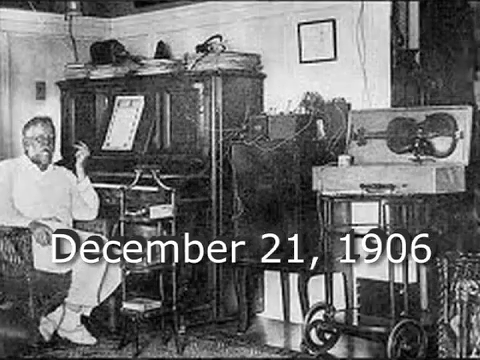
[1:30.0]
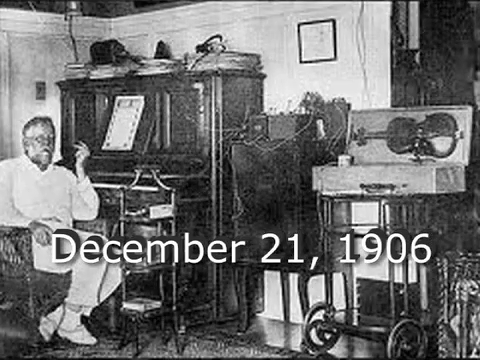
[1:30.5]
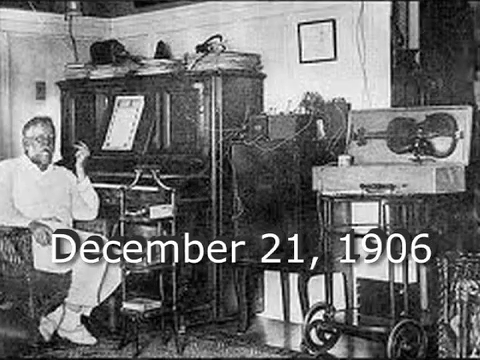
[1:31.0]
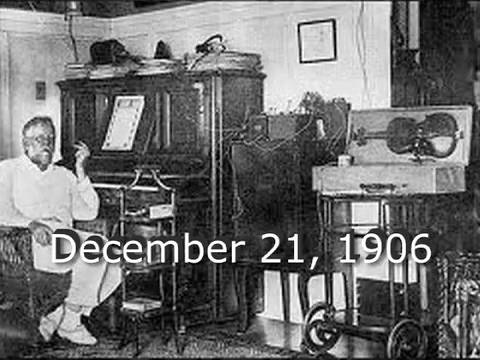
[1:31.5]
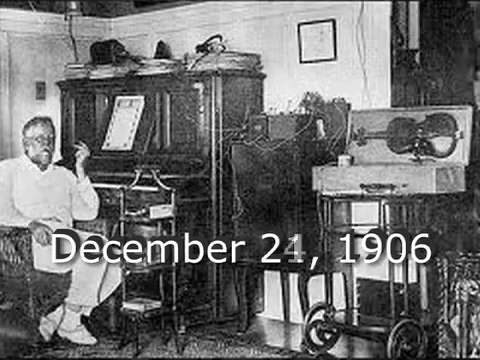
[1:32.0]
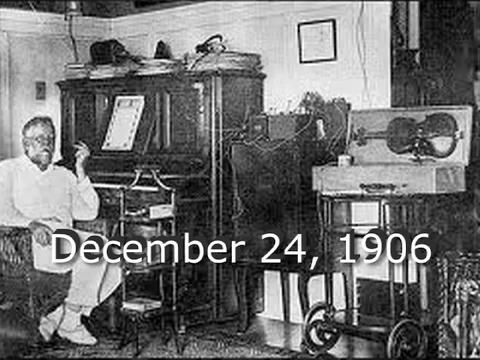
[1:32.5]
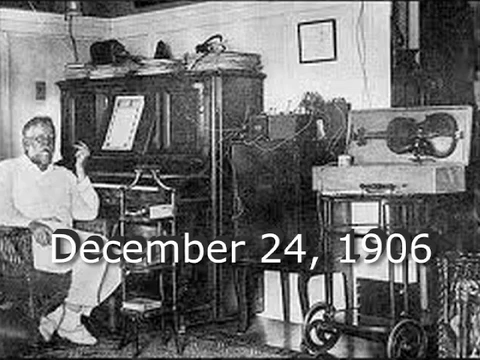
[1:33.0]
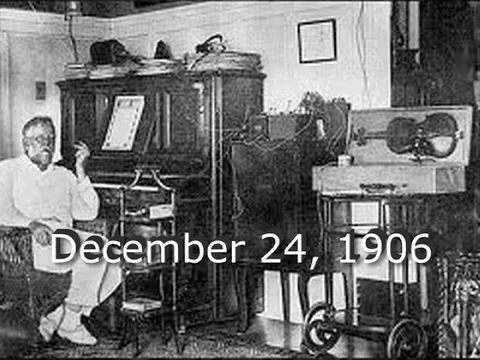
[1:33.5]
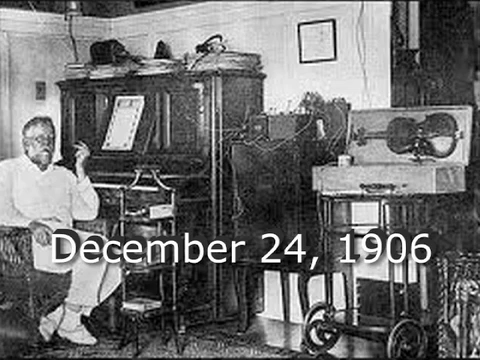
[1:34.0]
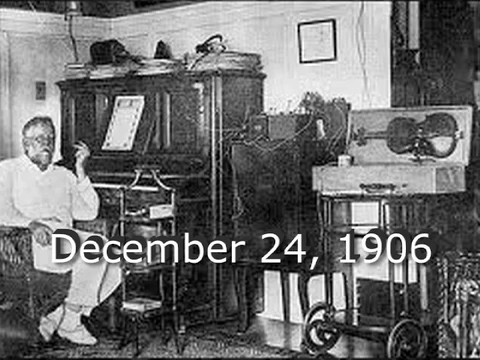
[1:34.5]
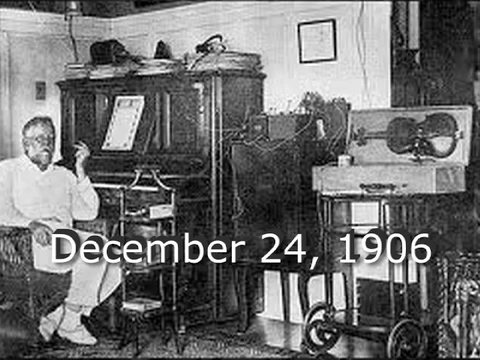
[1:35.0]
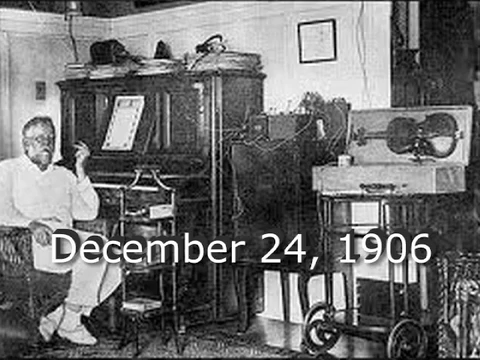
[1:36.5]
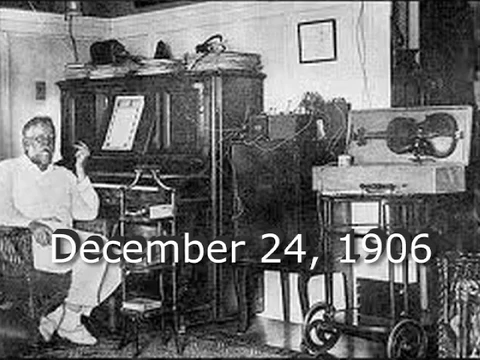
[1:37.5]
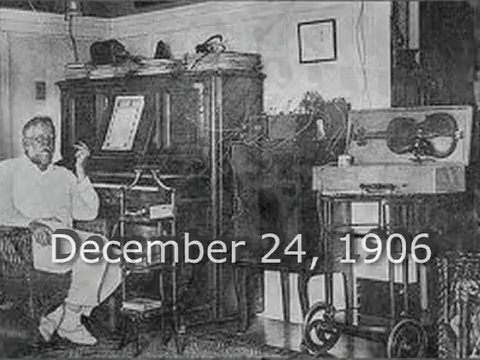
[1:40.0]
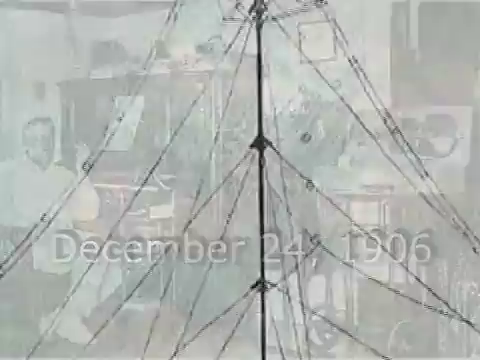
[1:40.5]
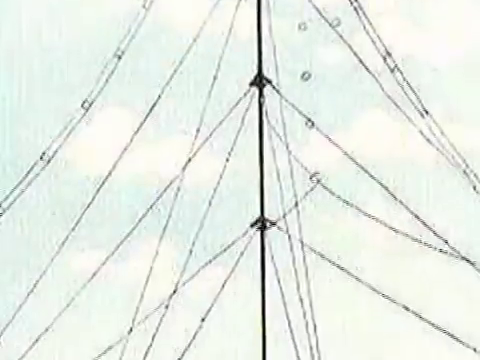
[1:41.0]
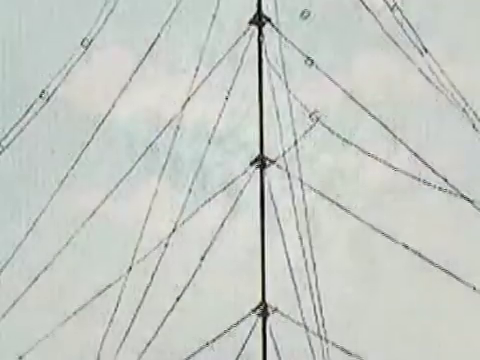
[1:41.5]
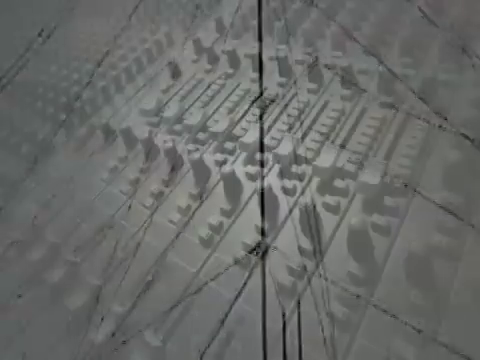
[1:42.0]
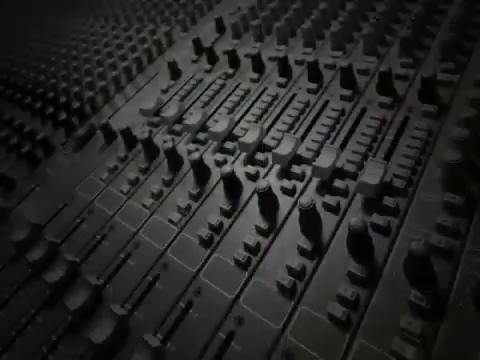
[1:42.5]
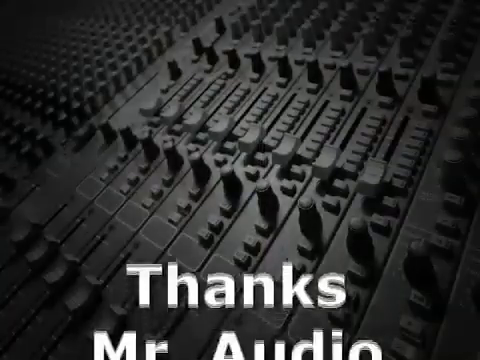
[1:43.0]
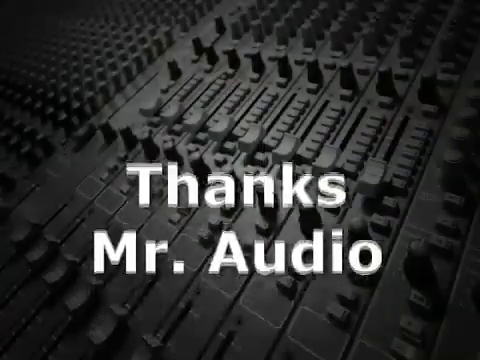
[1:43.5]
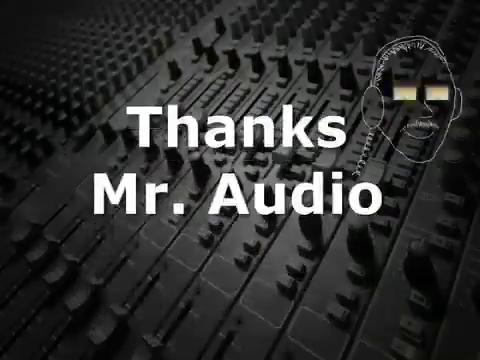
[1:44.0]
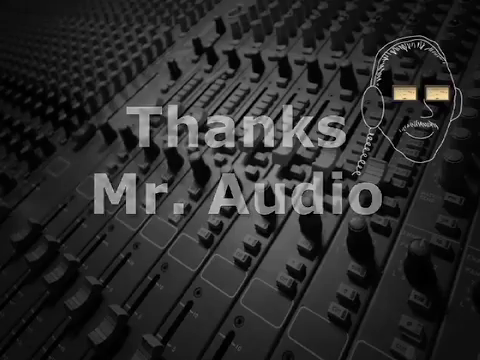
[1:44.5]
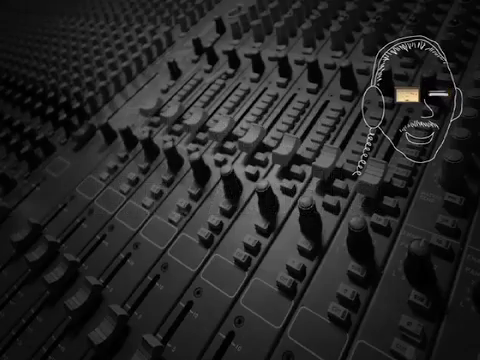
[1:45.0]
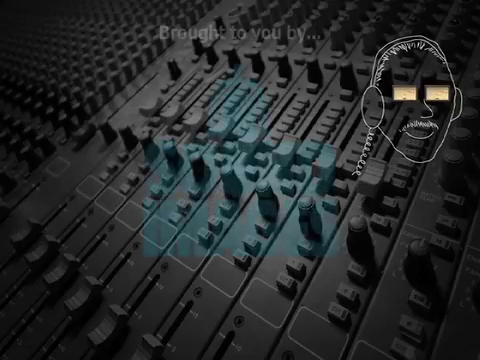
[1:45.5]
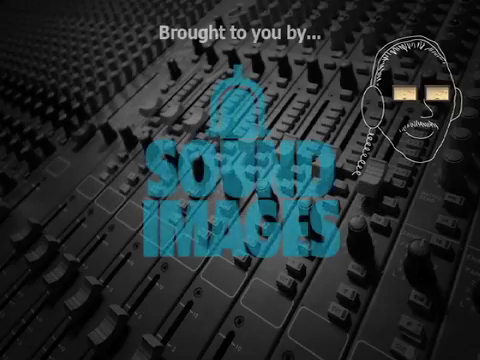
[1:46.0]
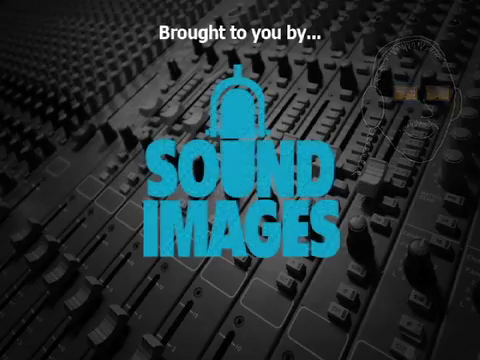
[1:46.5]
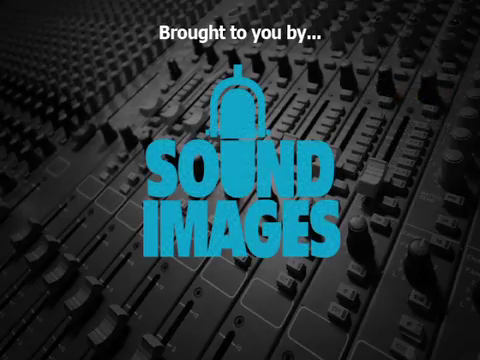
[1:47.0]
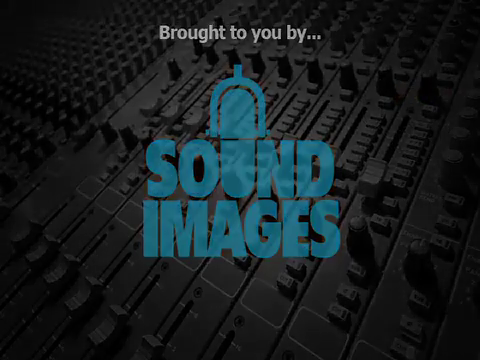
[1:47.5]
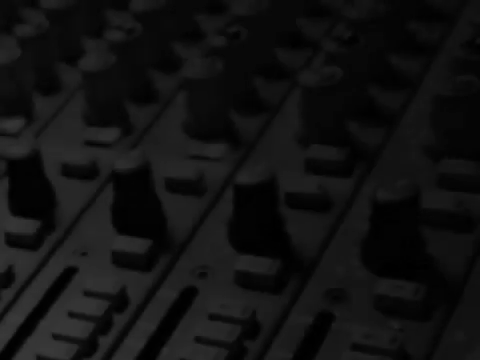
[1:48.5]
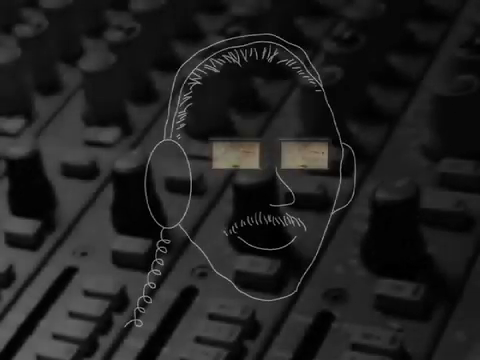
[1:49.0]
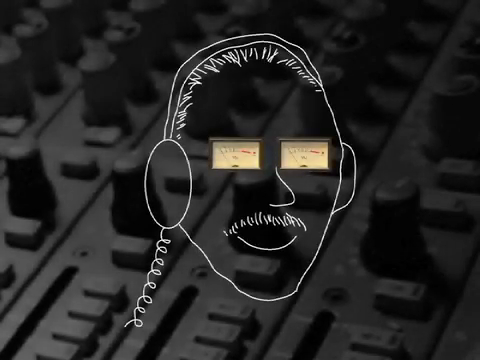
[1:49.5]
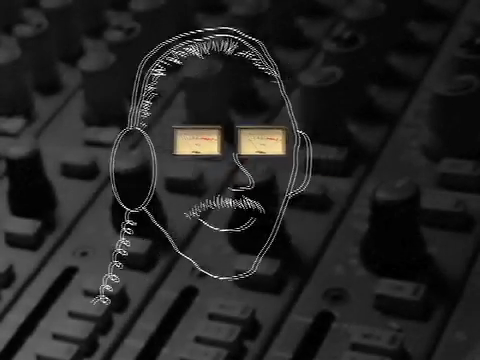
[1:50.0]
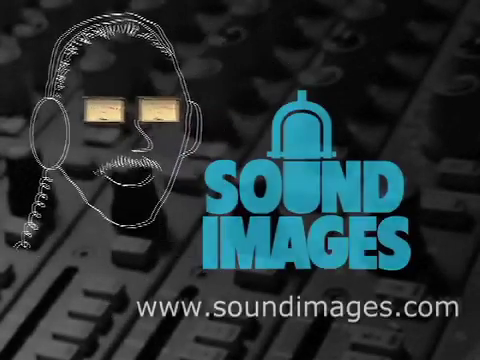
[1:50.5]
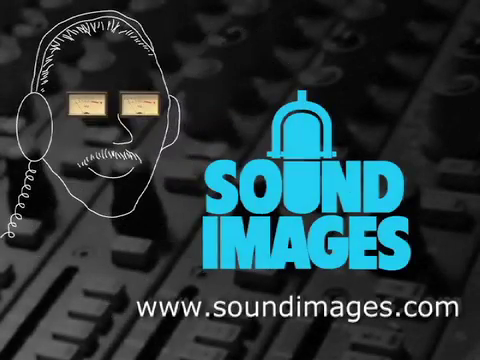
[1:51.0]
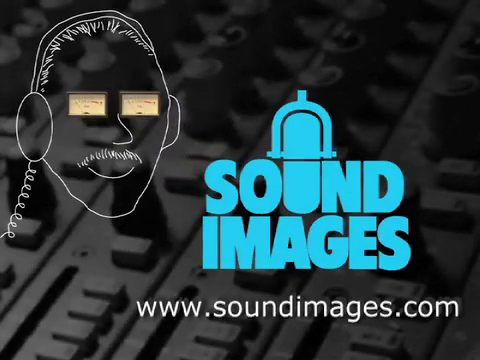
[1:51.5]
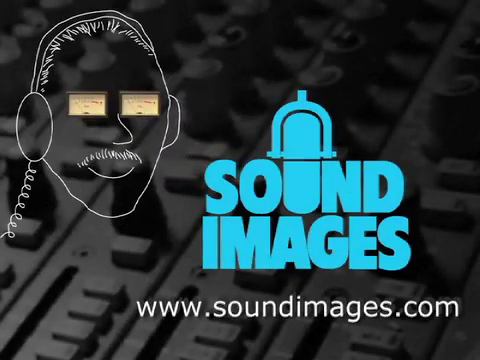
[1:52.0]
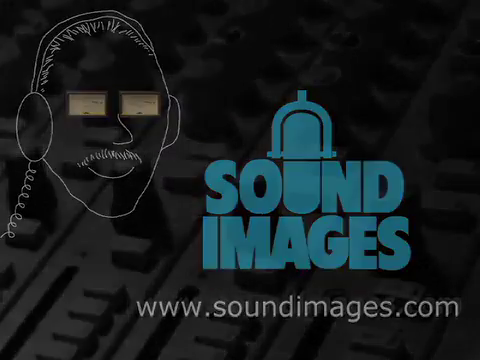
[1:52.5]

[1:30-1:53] The image of the man continues, now with a slight transition of the dates, and stays on screen a little longer. The man is sitting in front of what almost looks like a spot where a piano would be, but there is no piano, just a lot of wiring and things sticking out above a cupboard piece. To the far right is a stand with a violin in a little cupboard. He is looking at the camera, and the photo appears casual rather than professional. The video ends with credits thanking Mr. Audio, featuring a little illustration, a website URL, a logo, and the Mr. Audio icon of the man seen earlier.